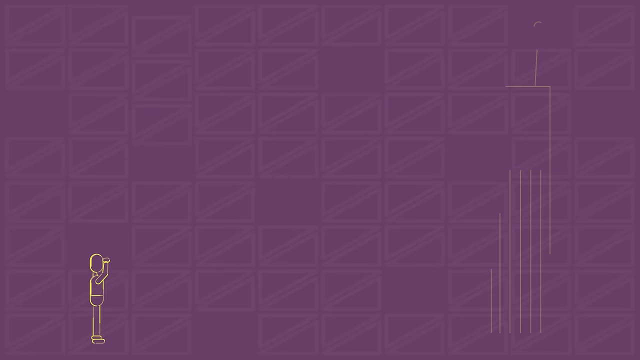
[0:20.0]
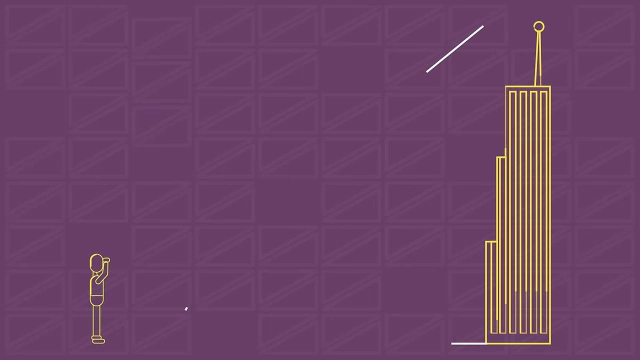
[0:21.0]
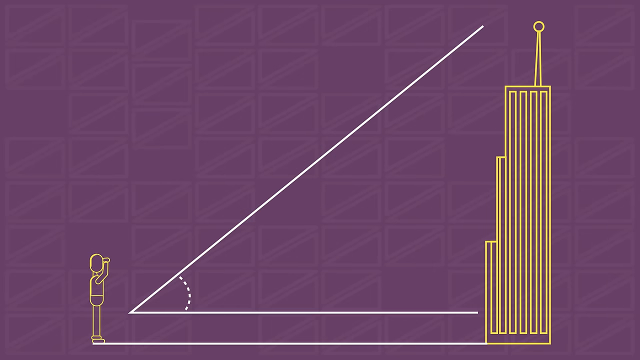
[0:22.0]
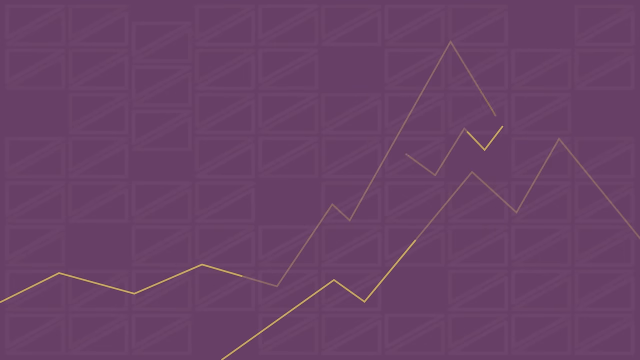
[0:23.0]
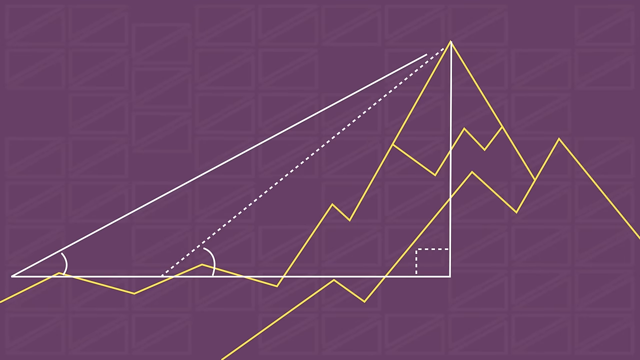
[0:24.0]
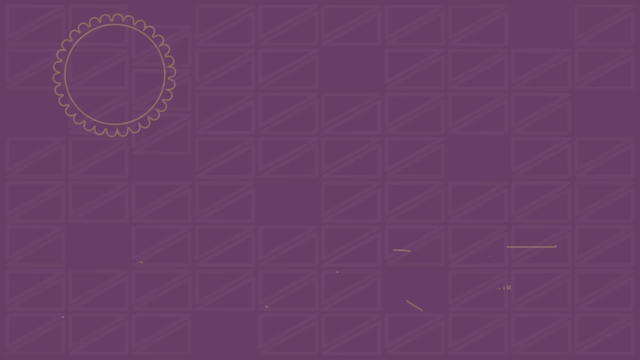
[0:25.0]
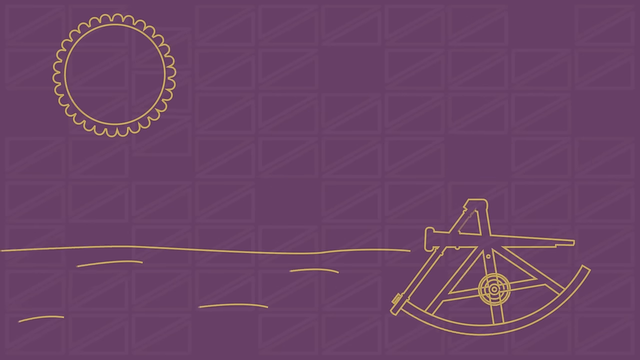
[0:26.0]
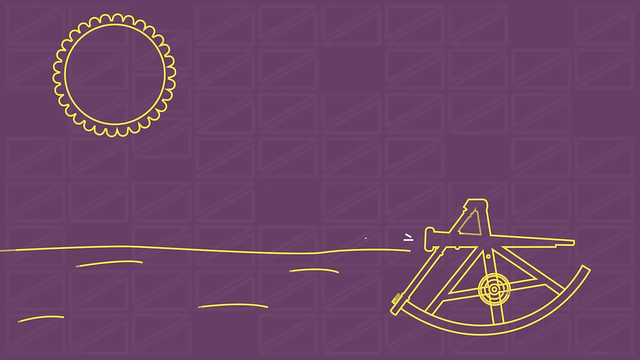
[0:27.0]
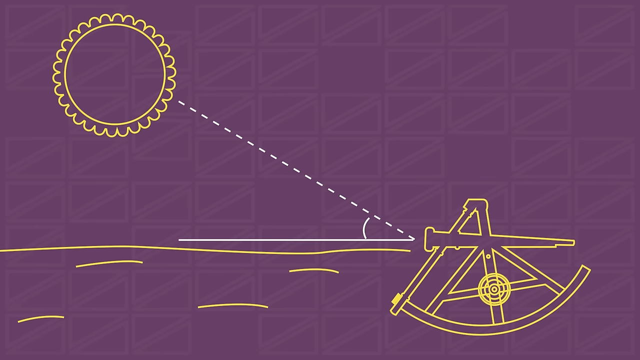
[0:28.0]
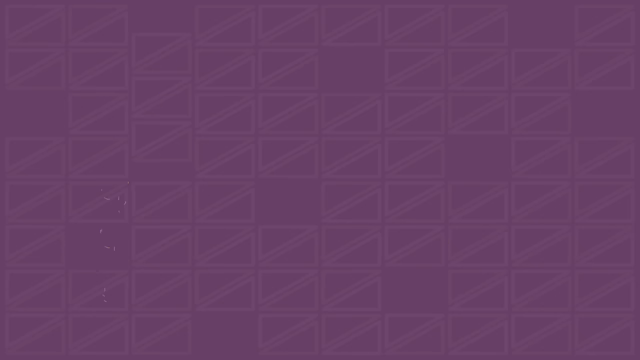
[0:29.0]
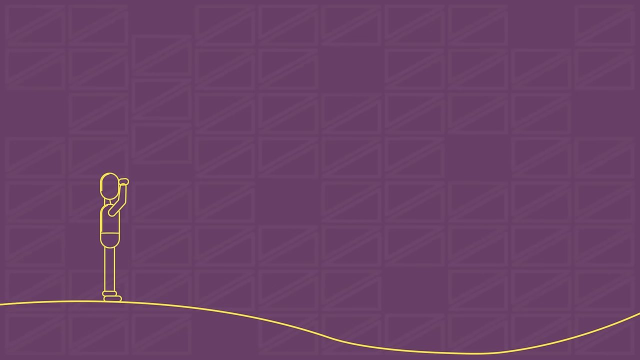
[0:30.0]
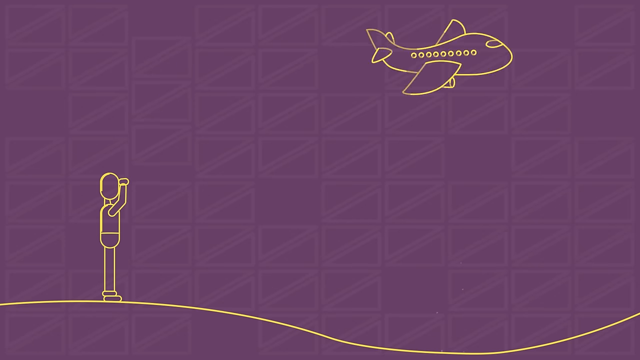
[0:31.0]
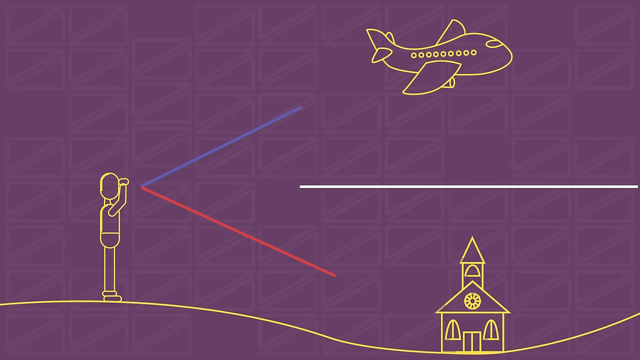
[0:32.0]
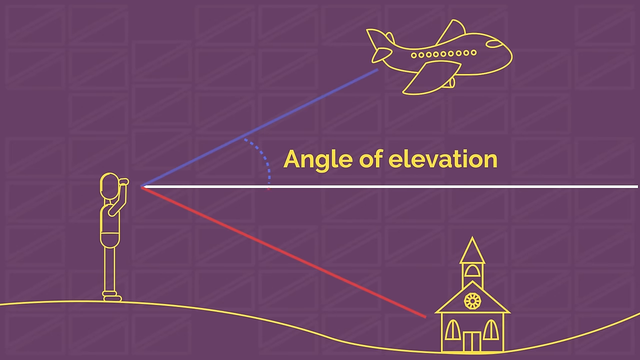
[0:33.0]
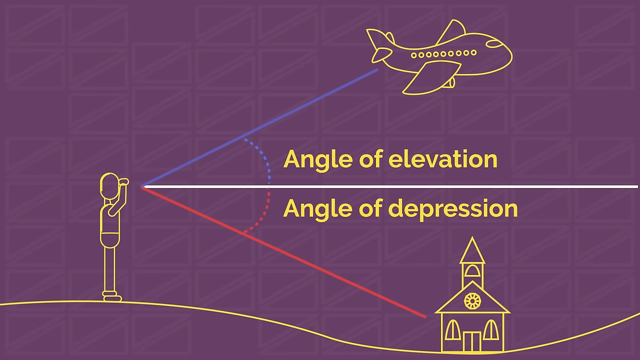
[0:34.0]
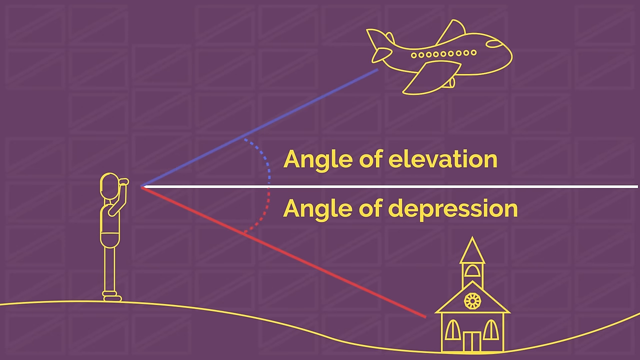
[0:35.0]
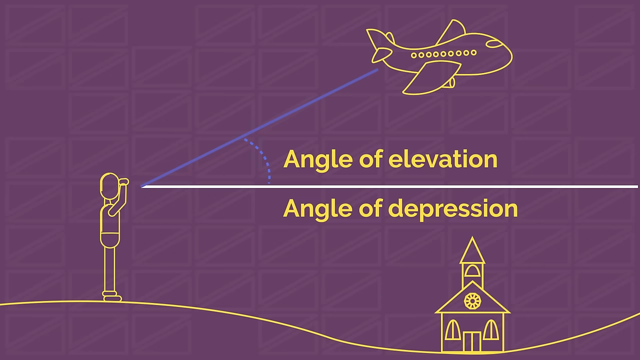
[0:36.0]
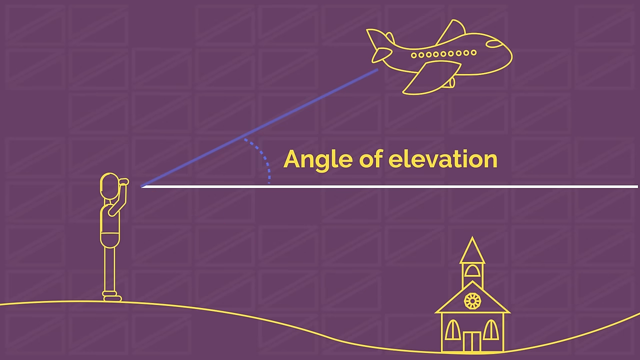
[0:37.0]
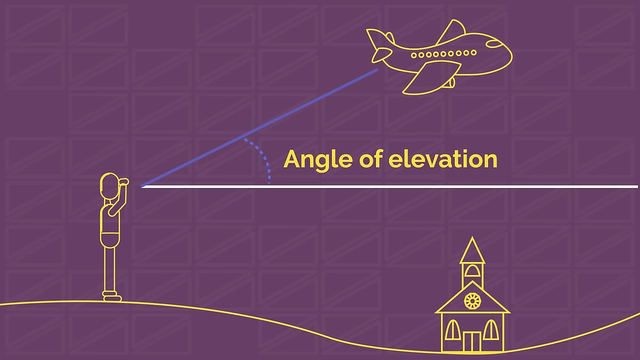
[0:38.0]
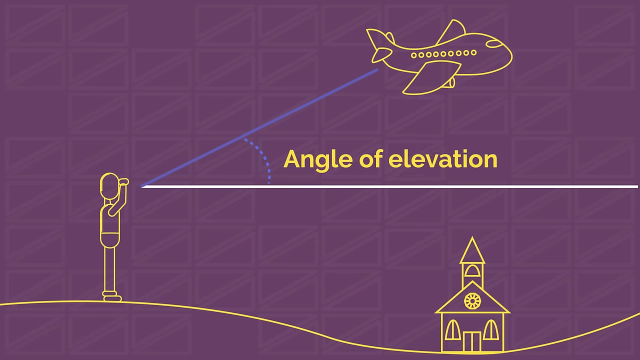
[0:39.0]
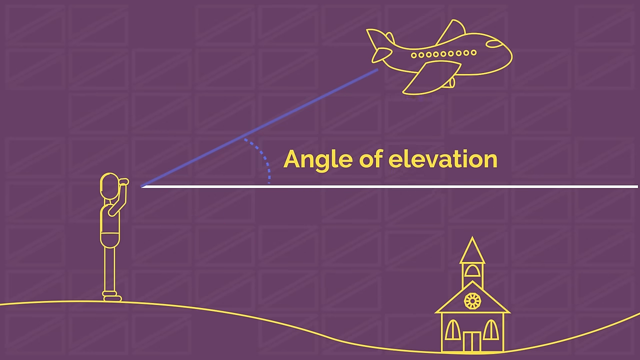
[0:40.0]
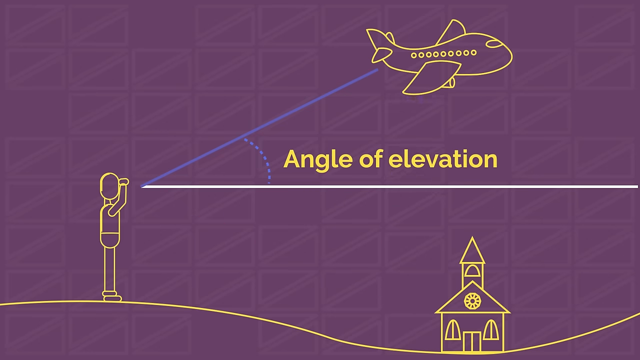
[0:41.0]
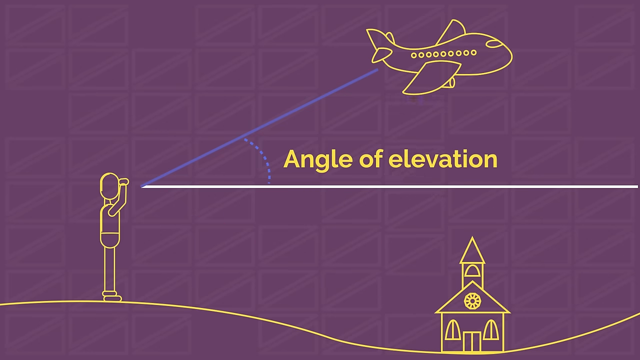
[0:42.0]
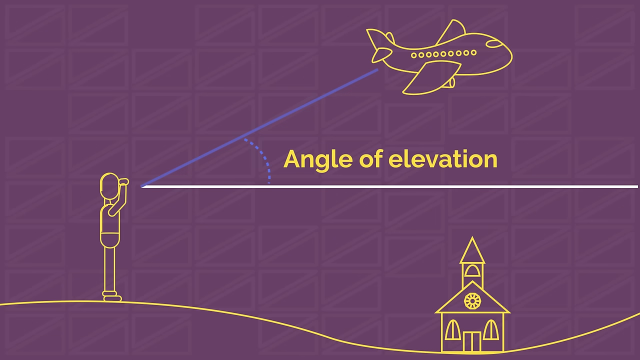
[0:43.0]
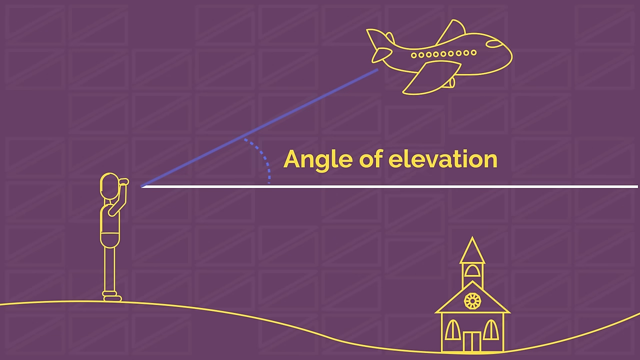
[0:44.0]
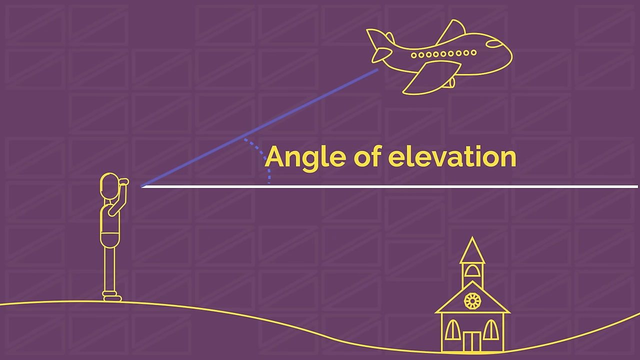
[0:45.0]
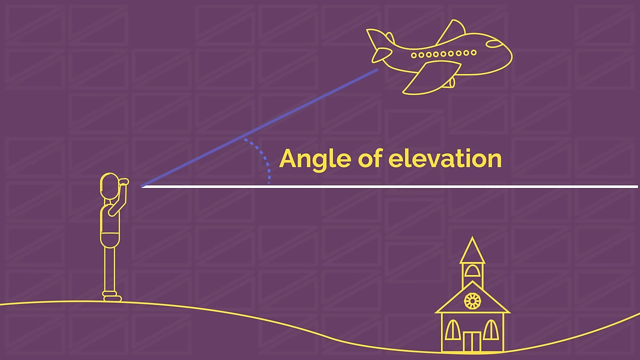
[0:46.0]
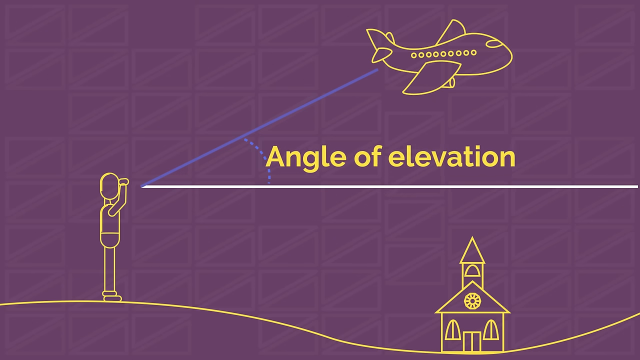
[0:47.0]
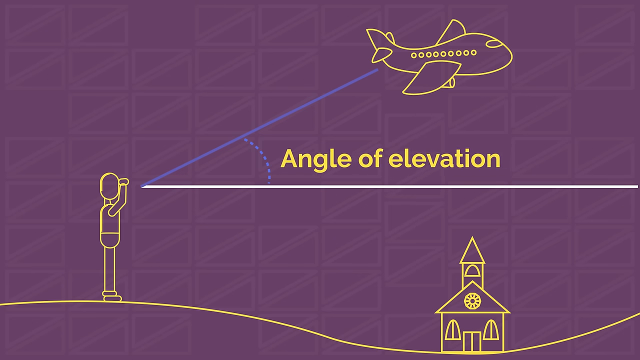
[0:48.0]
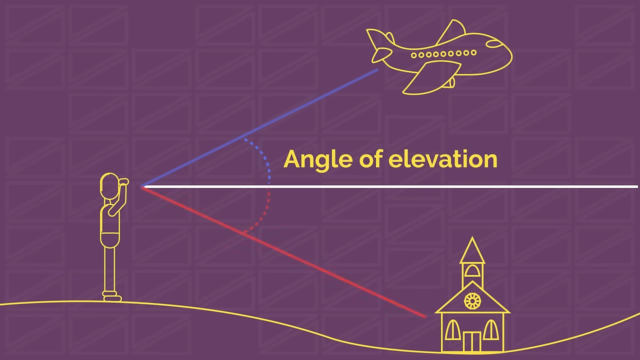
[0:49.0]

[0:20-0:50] The purple screen returns with a line drawing of a figure on the left and a line drawing of a tower on the right. A white line runs from the tip of the tower down to the person, apparently measuring the angle. Next comes a yellow outline drawing of mountain peaks overlaid with a right triangle; a dotted line marks the triangle's 90-degree corner, and markers appear in its other corners. Then a yellow outline of a sun appears in the upper left and, in the lower right, an outline of a measurement instrument, apparently a sextant, with a white line coming out of it going up towards the sun. The yellow outline of the figure then stands on rolling hills looking up at an airplane, also drawn as a yellow outline. Labels reading "angle of elevation" and then "angle of depression" appear, and a building that is possibly a church or a schoolhouse sits down in the valley between the hills. A line is drawn from the person's head towards the airplane, a horizontal white line extends from their head, and a red line is drawn down towards the schoolhouse.